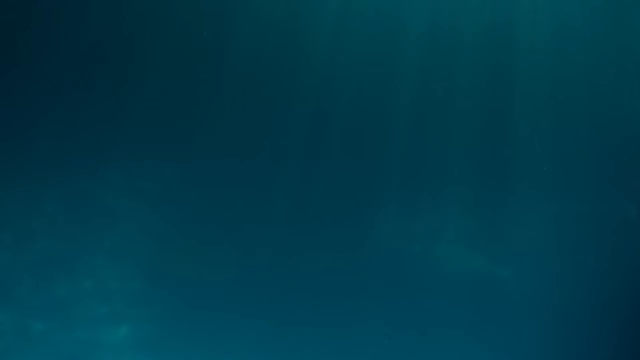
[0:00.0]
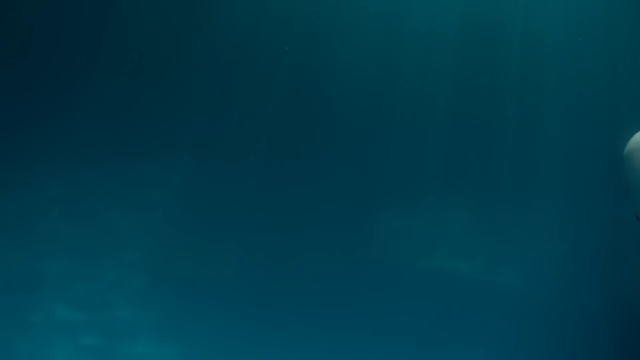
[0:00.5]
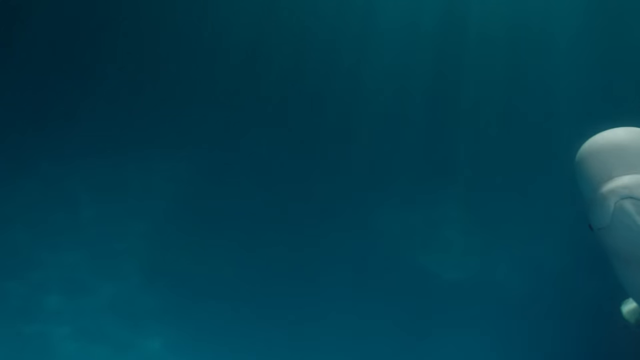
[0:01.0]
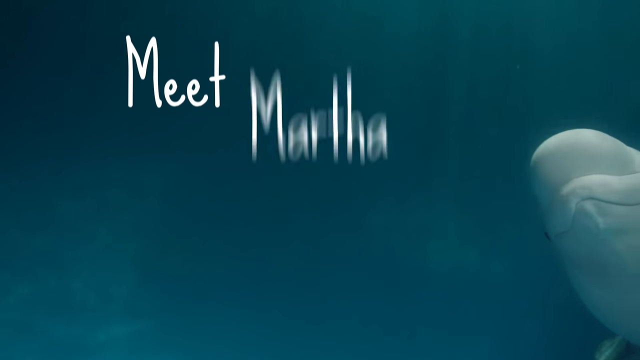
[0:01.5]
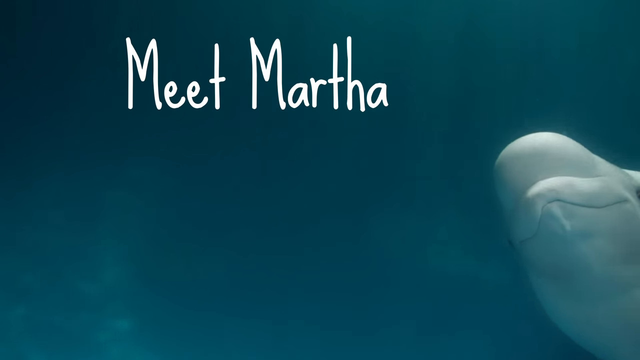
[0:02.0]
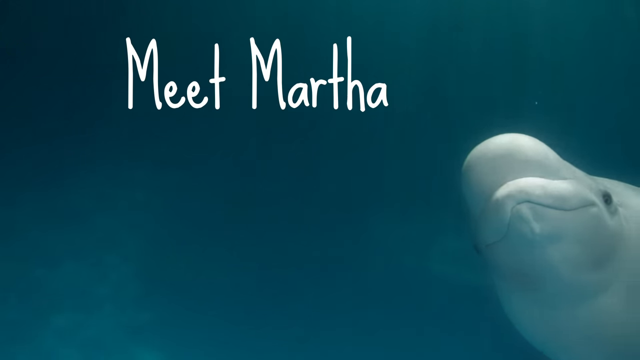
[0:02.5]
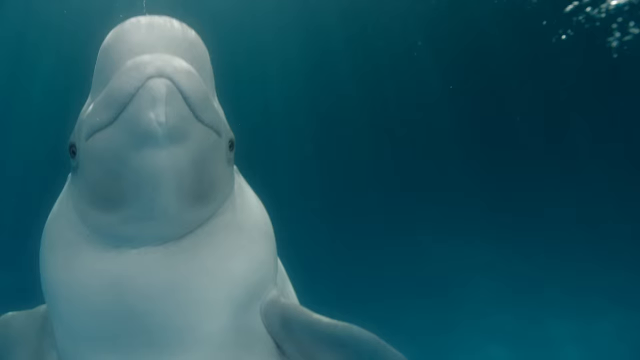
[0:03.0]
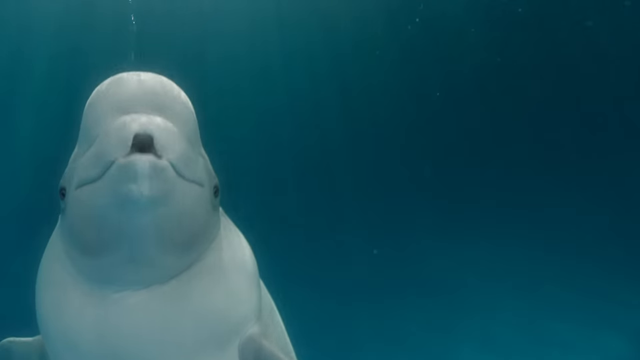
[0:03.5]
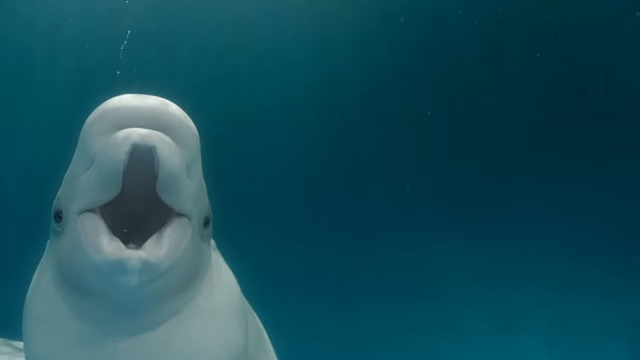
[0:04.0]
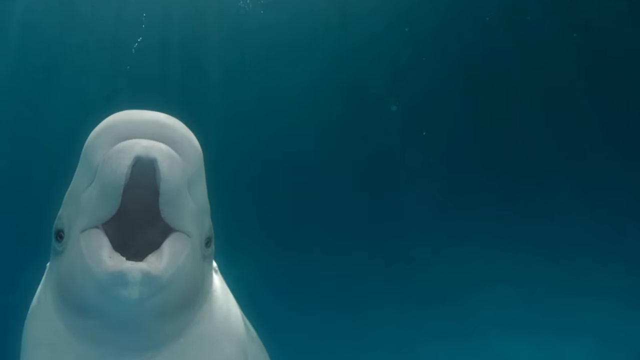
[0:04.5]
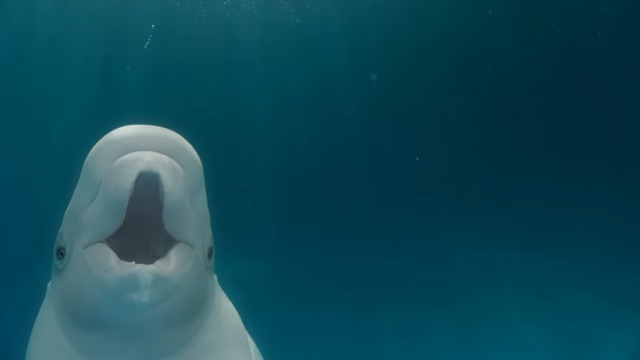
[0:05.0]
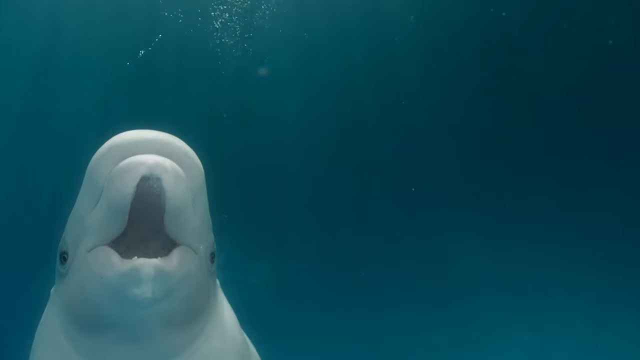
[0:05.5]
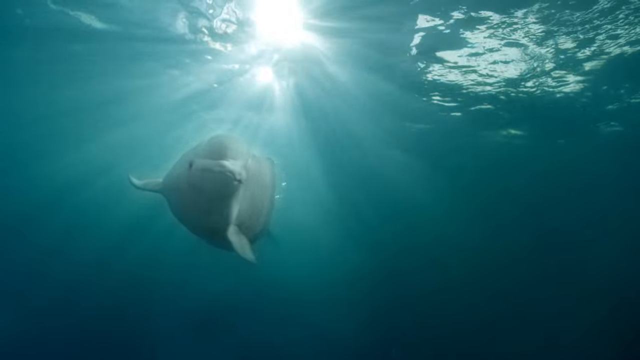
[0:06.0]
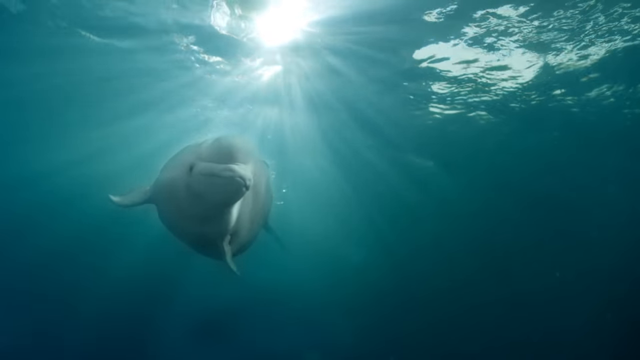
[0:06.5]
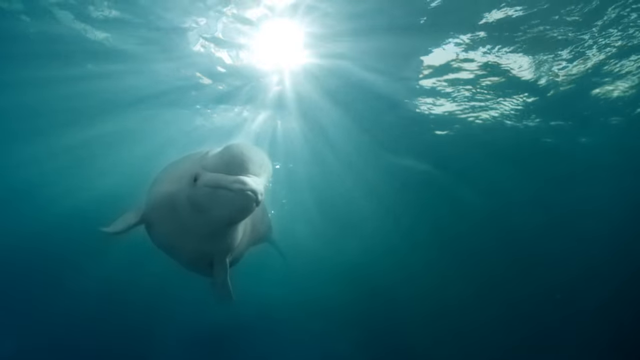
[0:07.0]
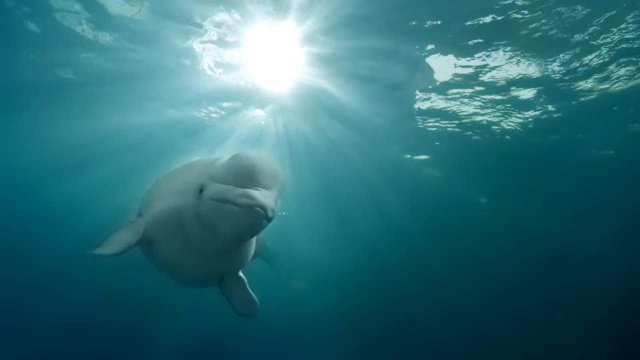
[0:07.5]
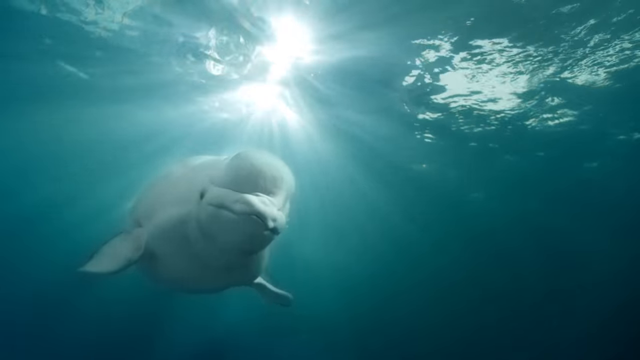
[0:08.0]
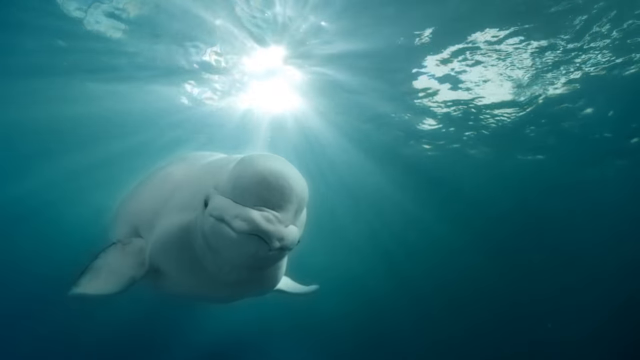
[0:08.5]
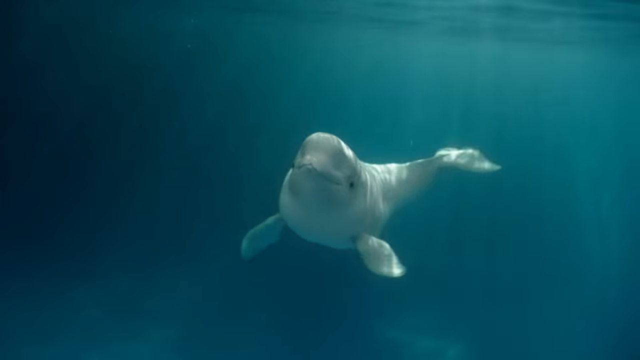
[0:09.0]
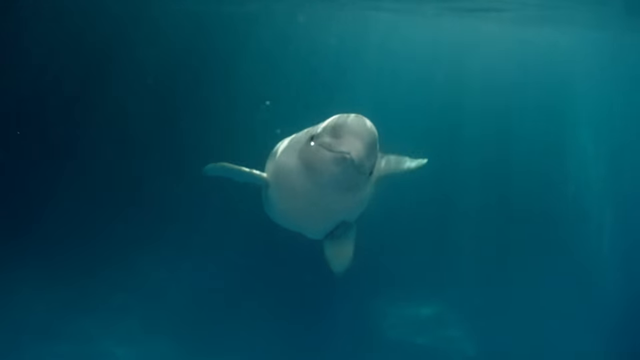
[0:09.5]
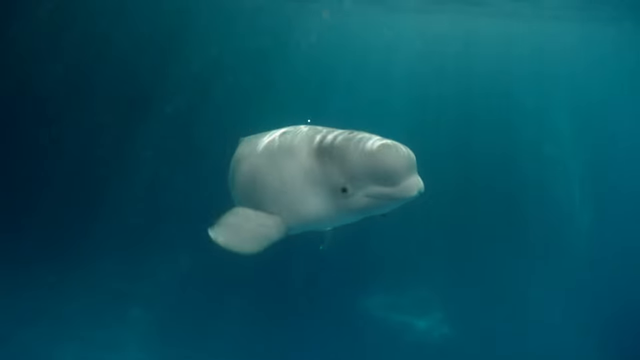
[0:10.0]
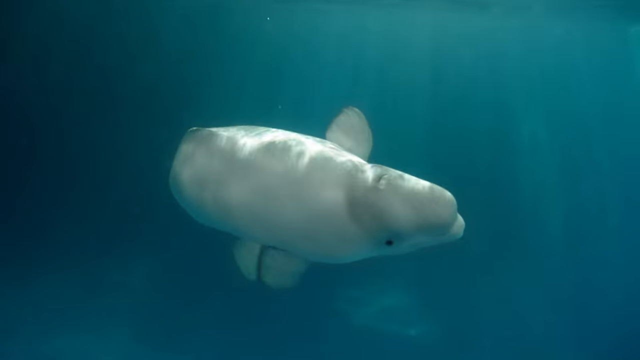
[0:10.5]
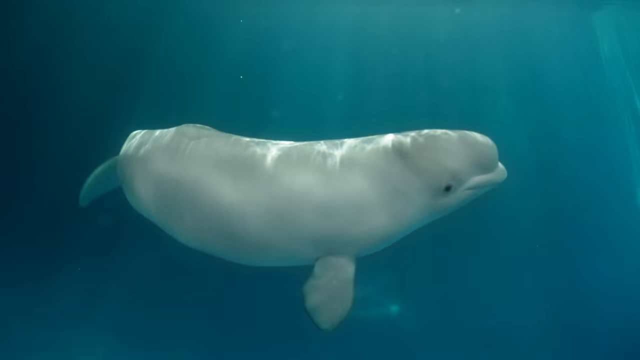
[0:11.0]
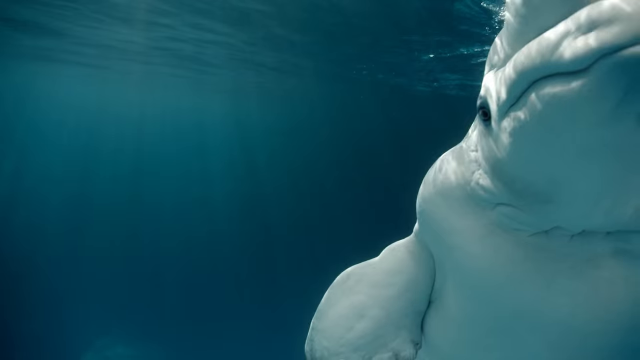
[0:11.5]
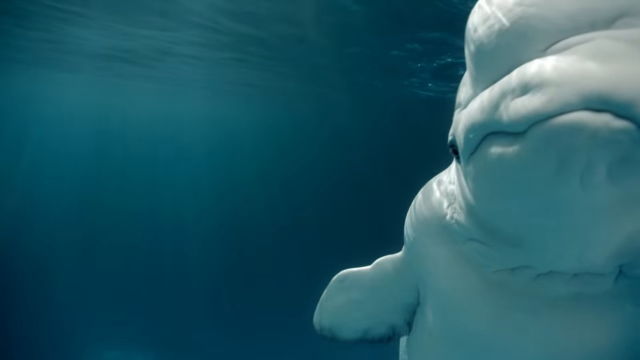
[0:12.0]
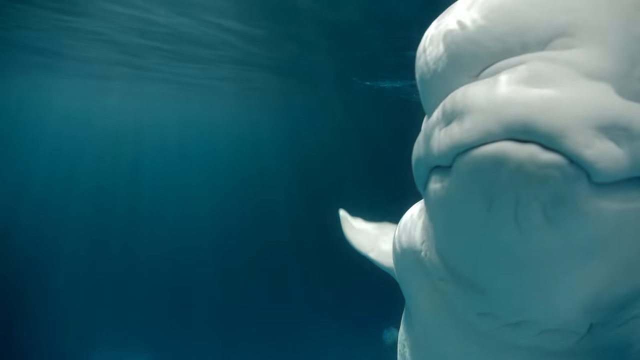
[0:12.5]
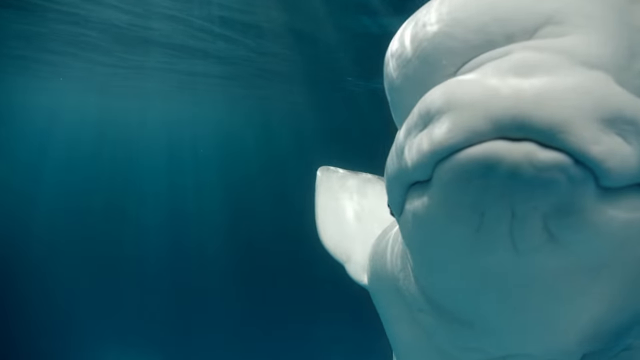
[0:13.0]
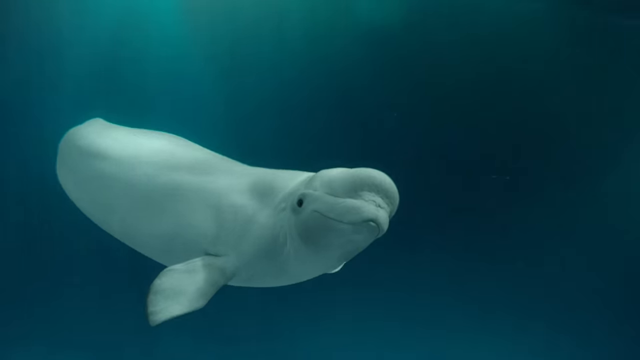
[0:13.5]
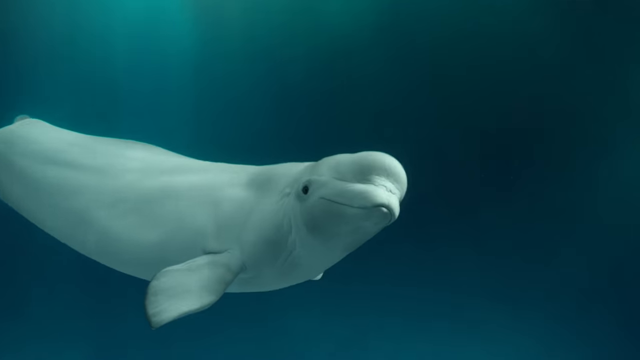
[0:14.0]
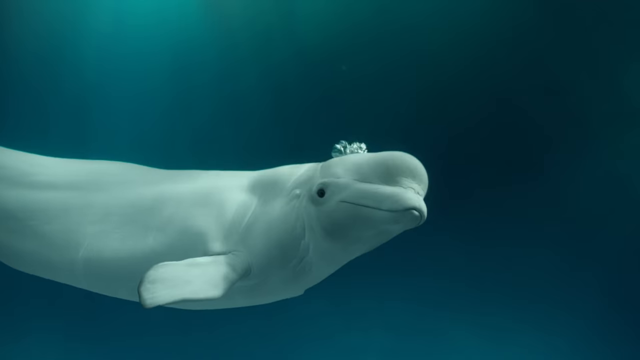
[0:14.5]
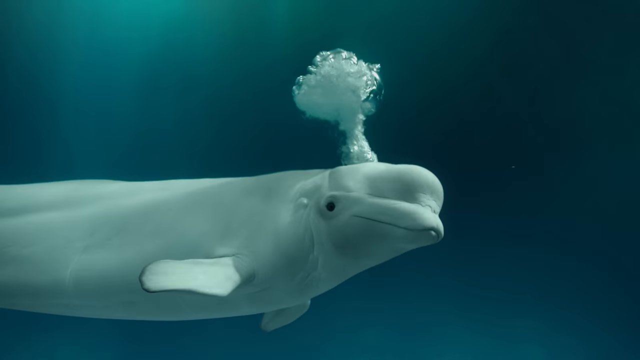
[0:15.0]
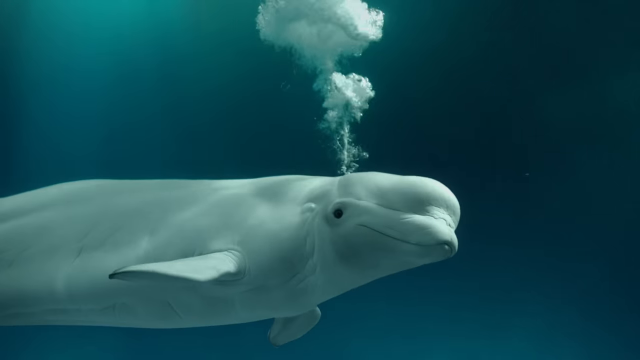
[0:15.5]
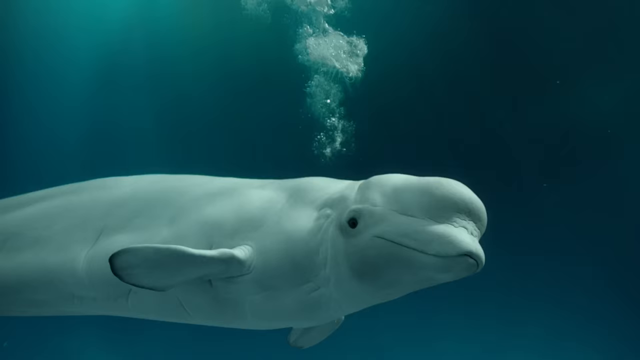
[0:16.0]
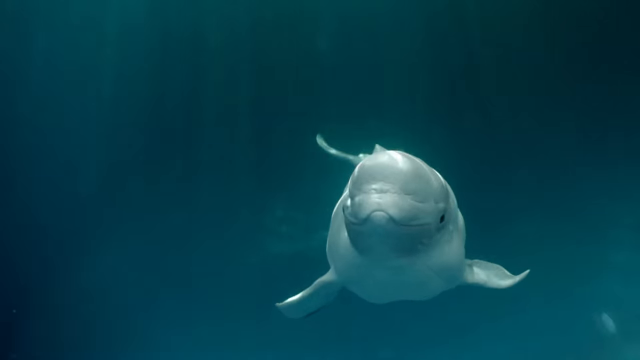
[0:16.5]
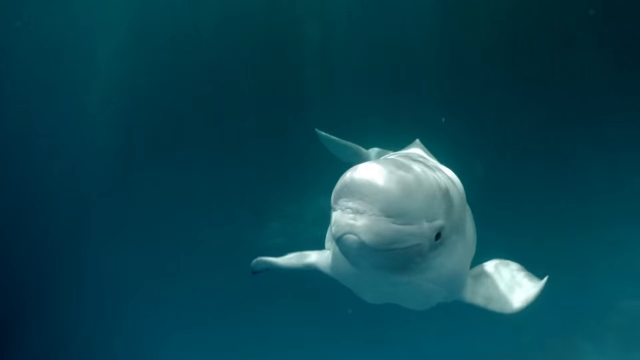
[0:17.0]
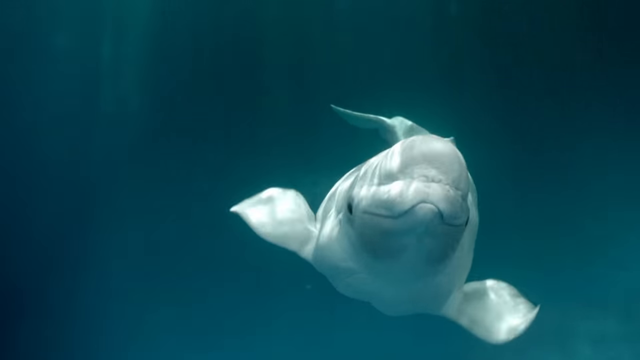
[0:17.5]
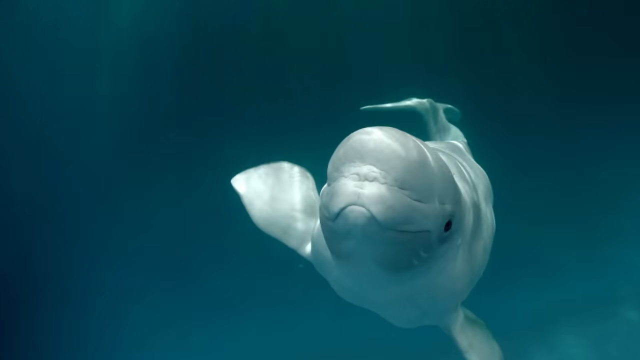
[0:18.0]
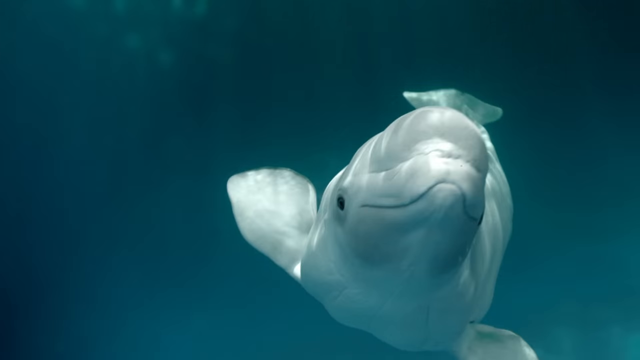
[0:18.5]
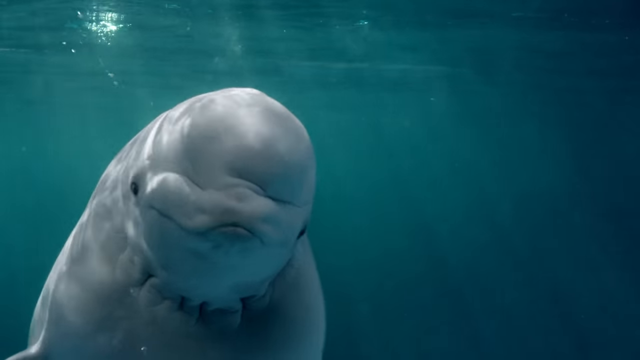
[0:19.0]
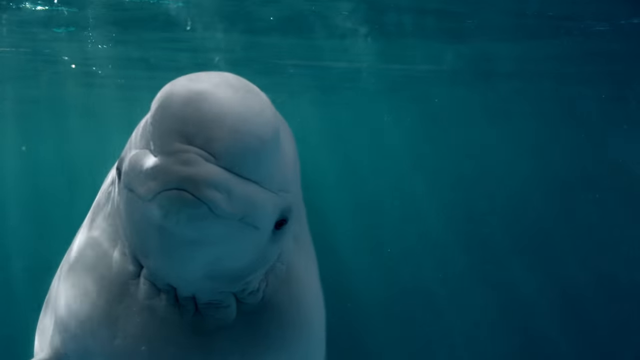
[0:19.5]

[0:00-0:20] The ad opens with a beluga whale moving on the right-hand side of the frame against a blue background, with white text at the top that reads "meet martha". Another shot shows the beluga whale on the left-hand side of the screen, floating, opening its mouth and making a shape with it; both of its eyes are visible, on the left and right sides. Next, in an underwater shot, the creature swims downwards towards the camera with the sun on the horizon in the background. Another shot shows the beluga whale swimming and rotating, turning towards the right-hand side of the camera as it moves its tail and flippers; light reflects off its skin, and its eye and mouth are visible. A zoomed-in shot then shows the floating beluga whale's face and head while its right flipper moves slightly up and down. Next, the same beluga whale is in the middle of the screen, swimming towards the right-hand side, and blows a large air bubble that takes up the top middle of the screen, looking towards the camera as it swims. In a front-facing underwater shot, the beluga whale looks at the camera, turns its head slightly and makes a slight rotation to the right.